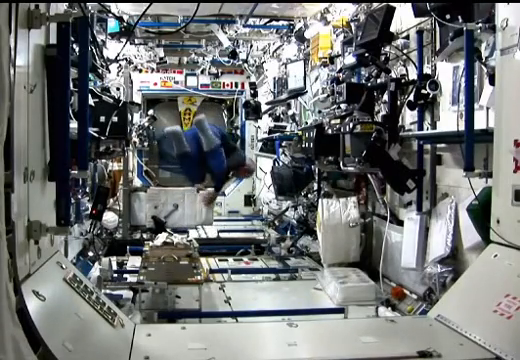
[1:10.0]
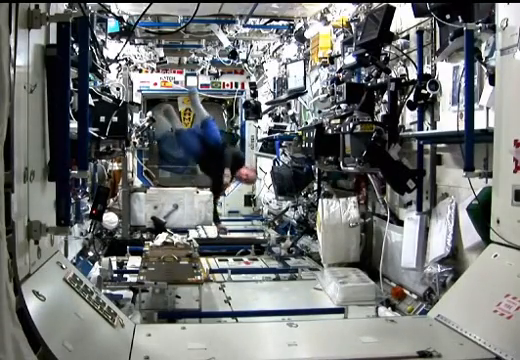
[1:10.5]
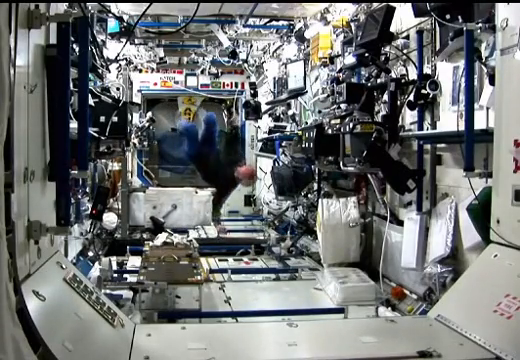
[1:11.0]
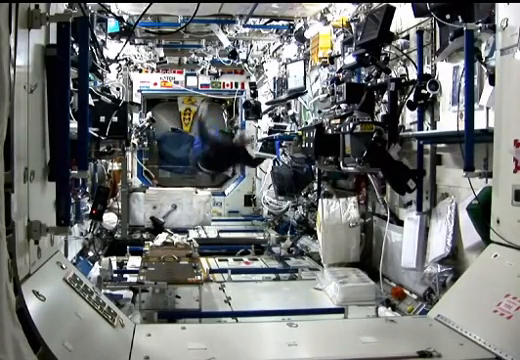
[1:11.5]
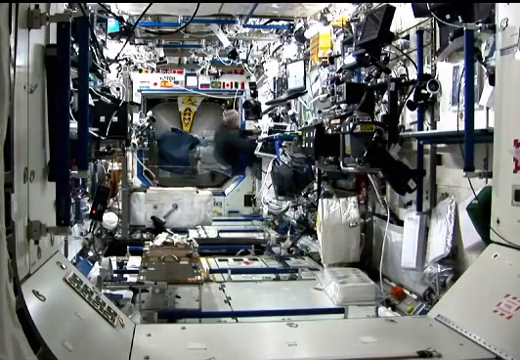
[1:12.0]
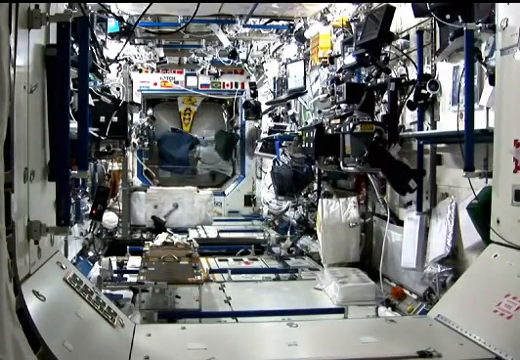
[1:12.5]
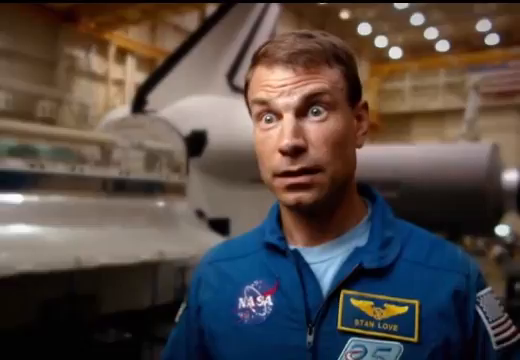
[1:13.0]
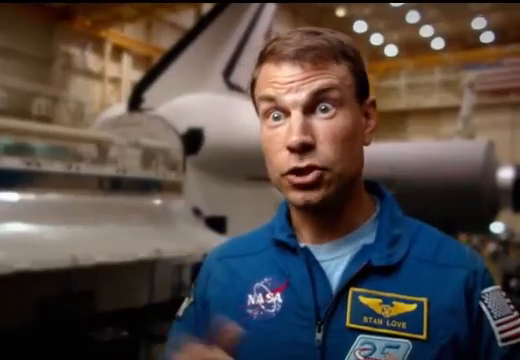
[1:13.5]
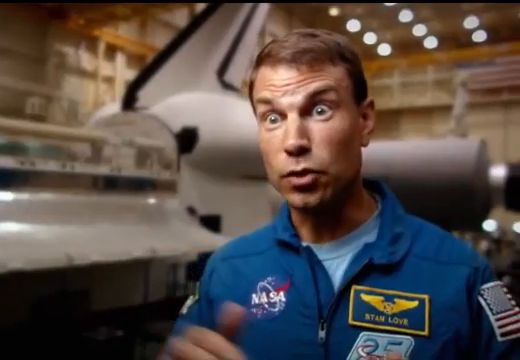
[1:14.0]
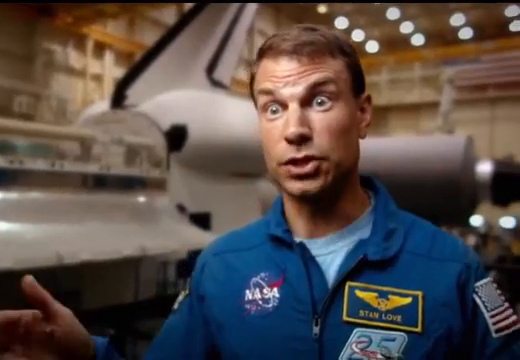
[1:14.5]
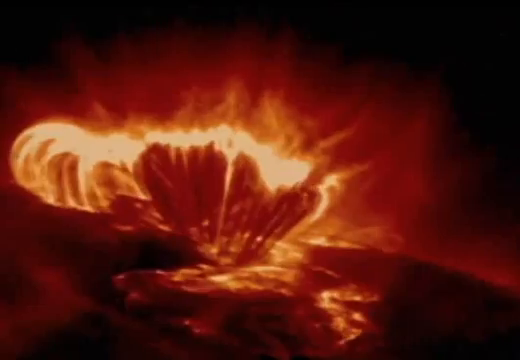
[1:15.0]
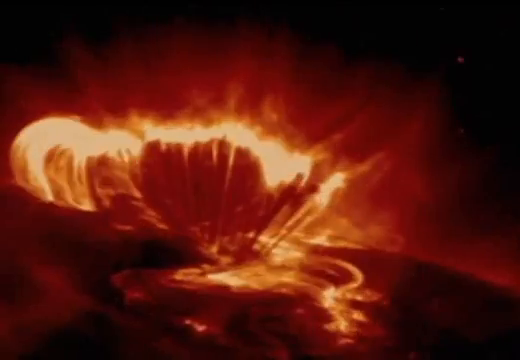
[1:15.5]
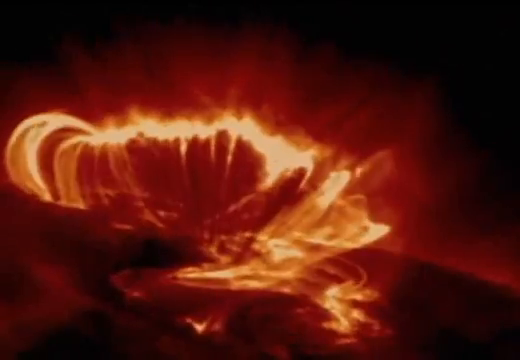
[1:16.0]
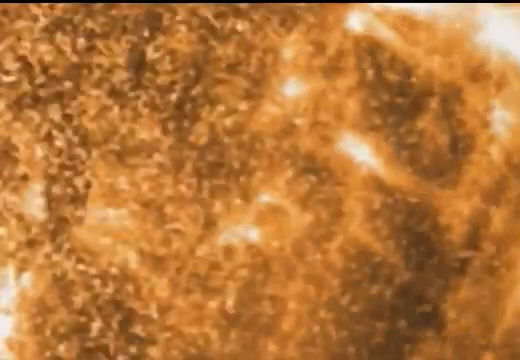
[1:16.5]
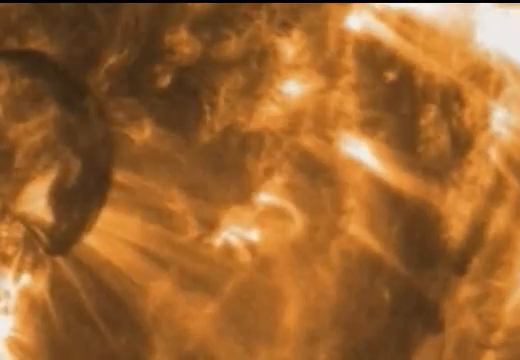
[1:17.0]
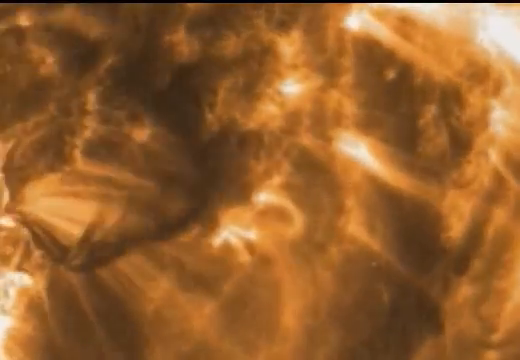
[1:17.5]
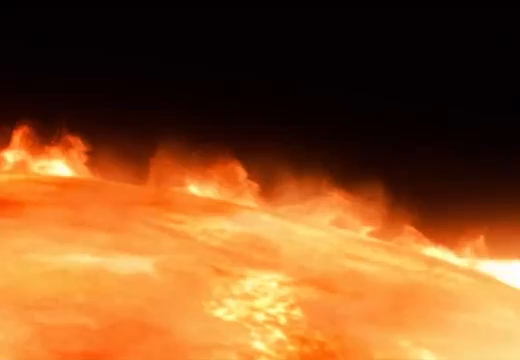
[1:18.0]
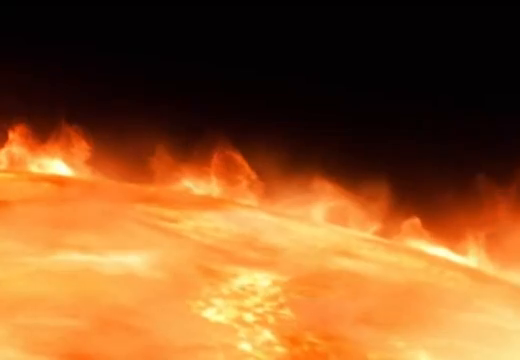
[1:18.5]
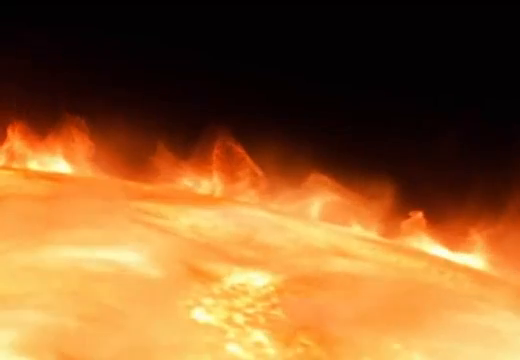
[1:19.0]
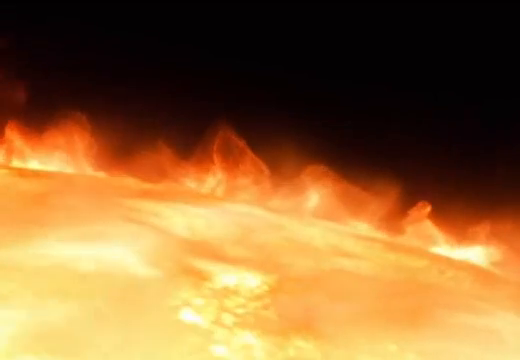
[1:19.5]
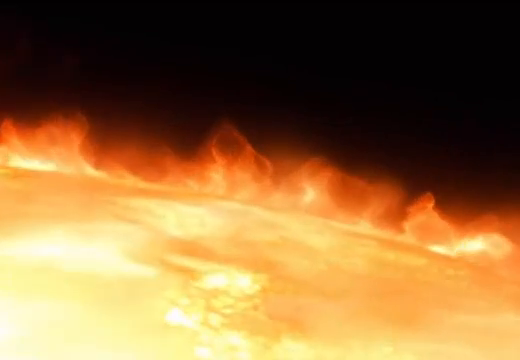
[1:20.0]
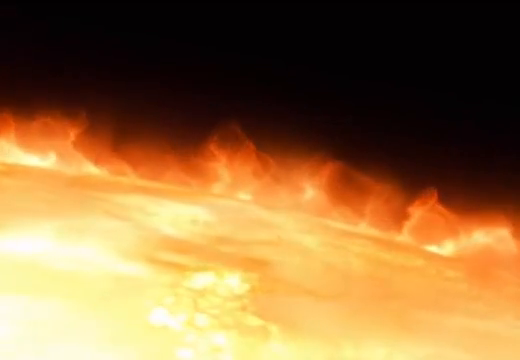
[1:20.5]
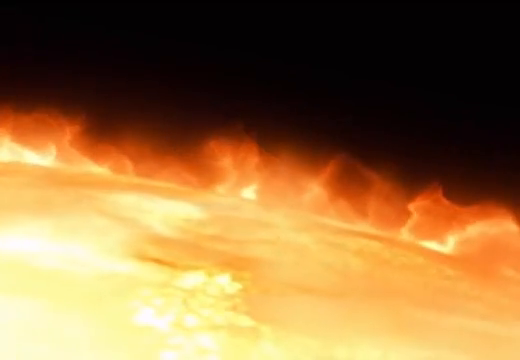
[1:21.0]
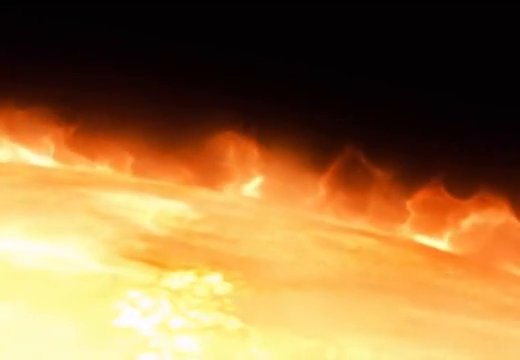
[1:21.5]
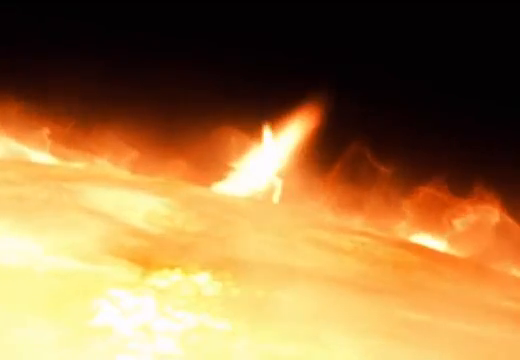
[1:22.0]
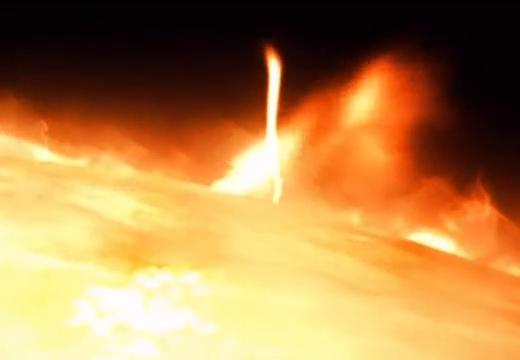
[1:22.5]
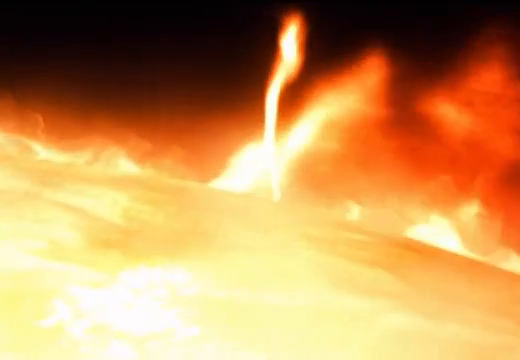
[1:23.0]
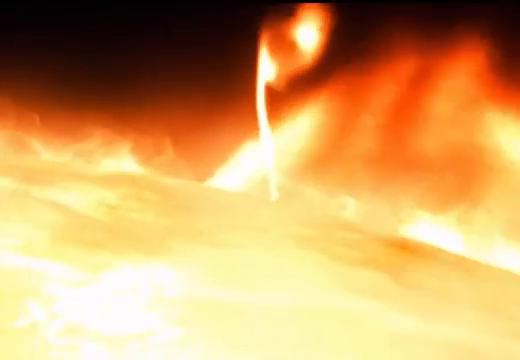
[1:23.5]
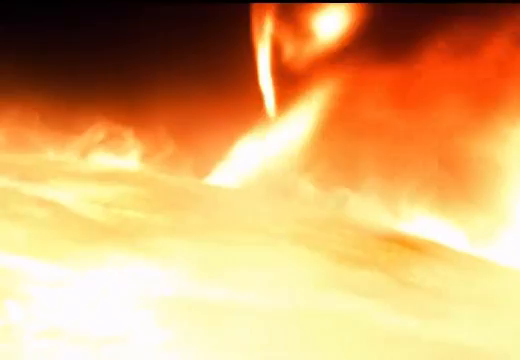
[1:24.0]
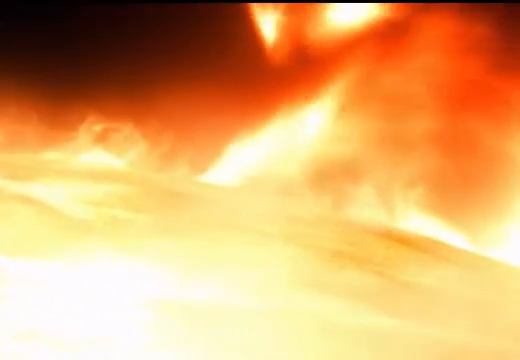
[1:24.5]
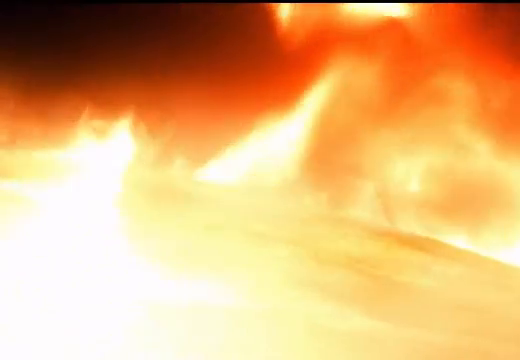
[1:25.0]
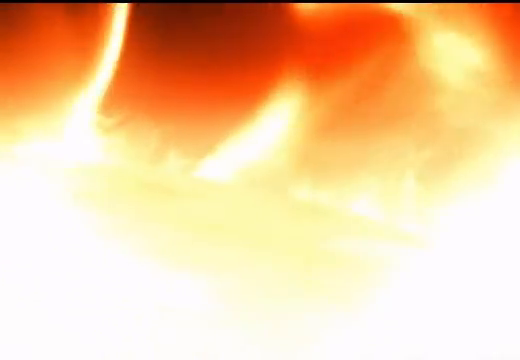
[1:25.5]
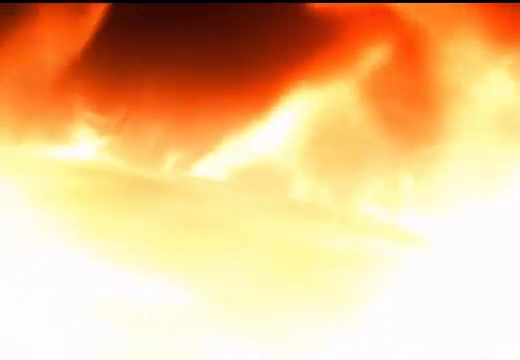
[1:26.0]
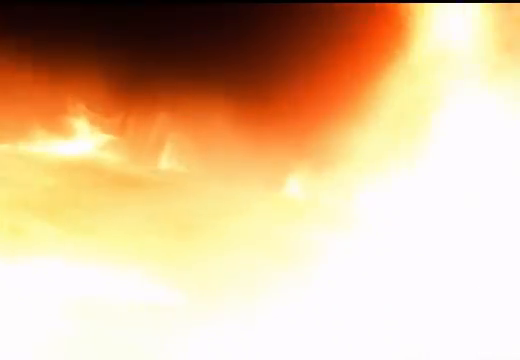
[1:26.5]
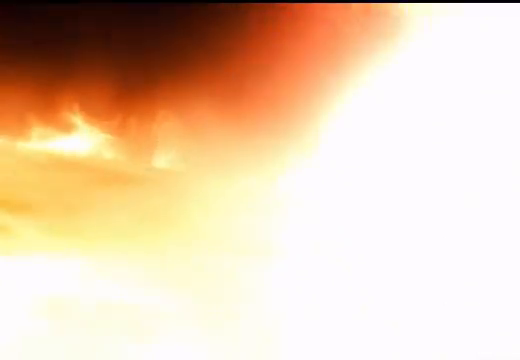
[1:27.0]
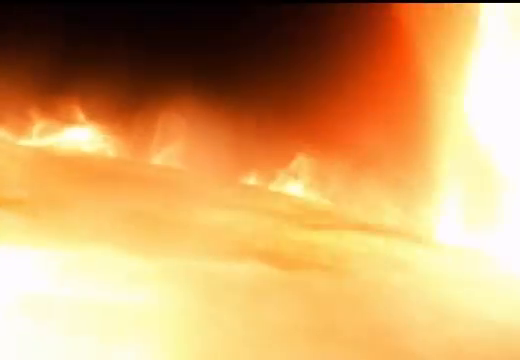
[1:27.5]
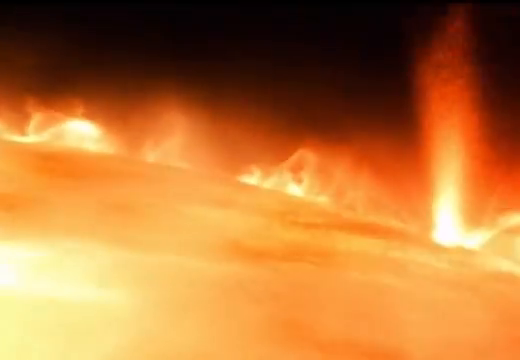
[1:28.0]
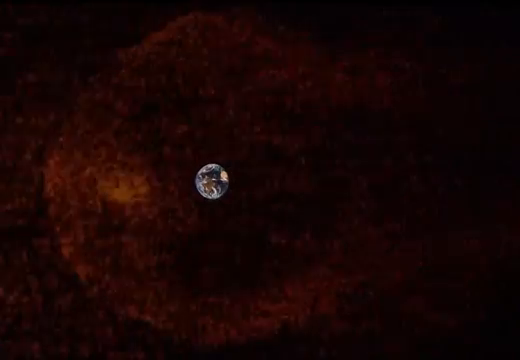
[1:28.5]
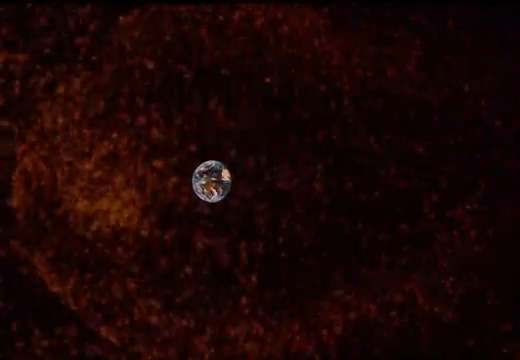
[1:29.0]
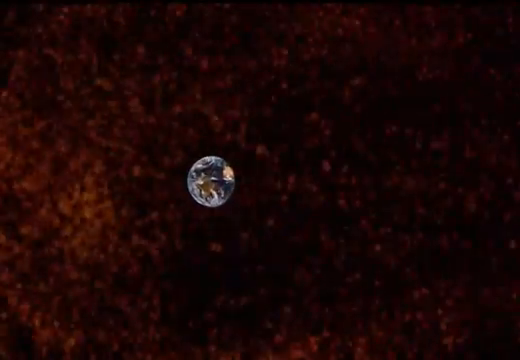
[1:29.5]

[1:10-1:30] The man floats up and down next to the room full of wires and compartments, which is mostly white and black. The view then moves to the man shown earlier, who looks to be an astronaut and is white Caucasian. Next comes a view of what looks like the sun, with several mostly orange flashes and flares emitting from it against a solid black background; more flashes and flares continue to emit. Then what looks like planet Earth appears as the view quickly zooms in on it. The video is rectangular in shape.